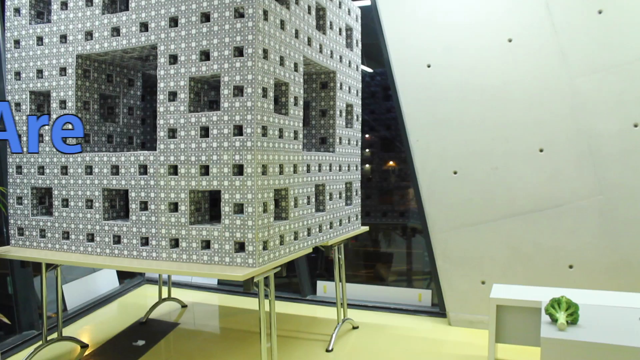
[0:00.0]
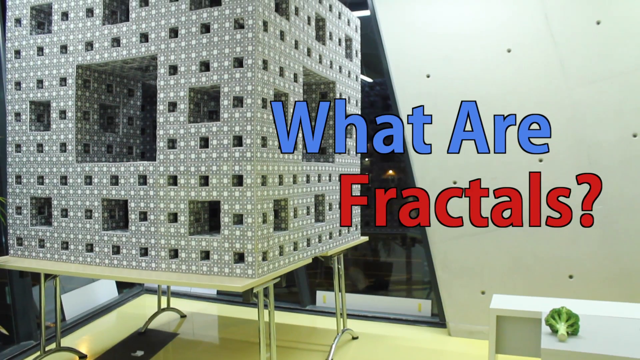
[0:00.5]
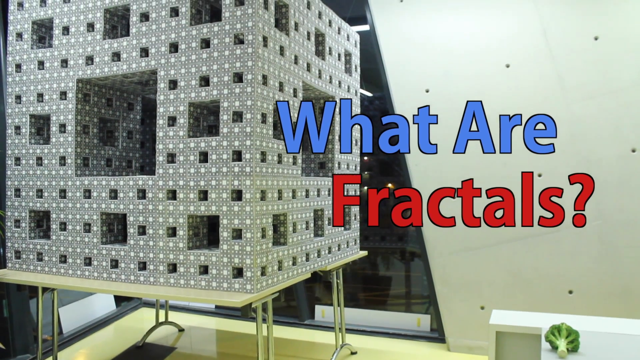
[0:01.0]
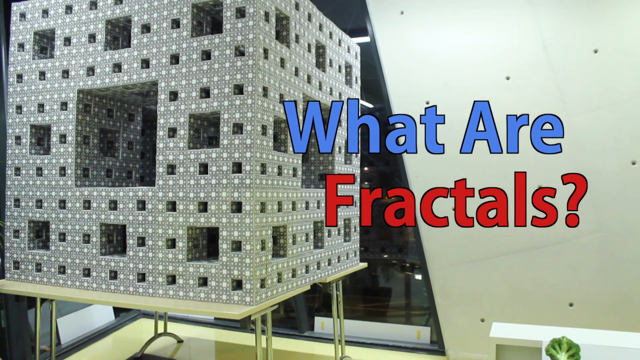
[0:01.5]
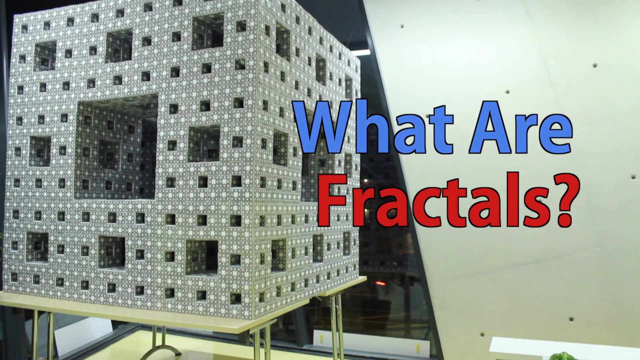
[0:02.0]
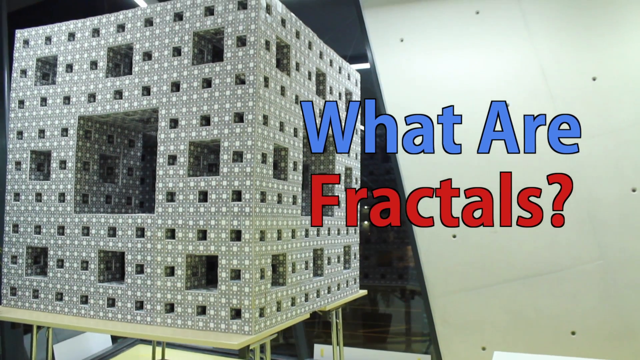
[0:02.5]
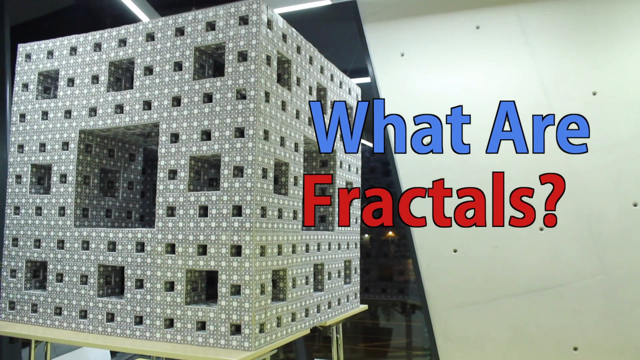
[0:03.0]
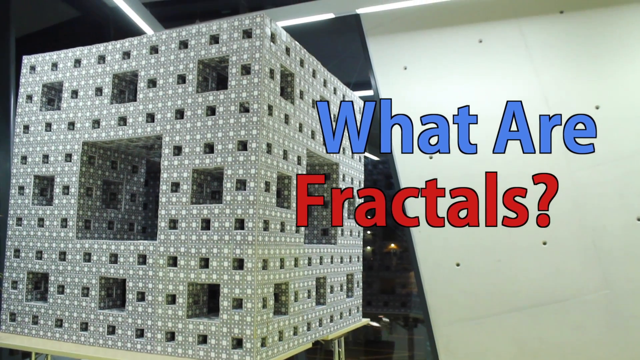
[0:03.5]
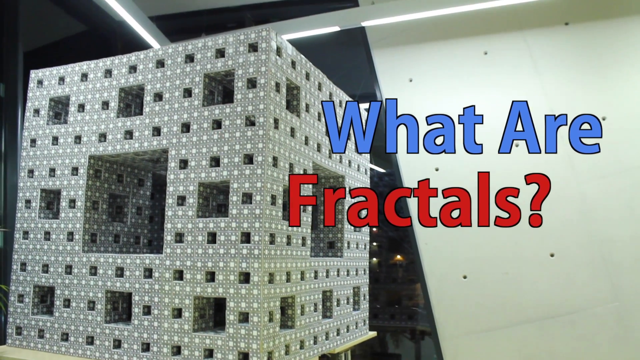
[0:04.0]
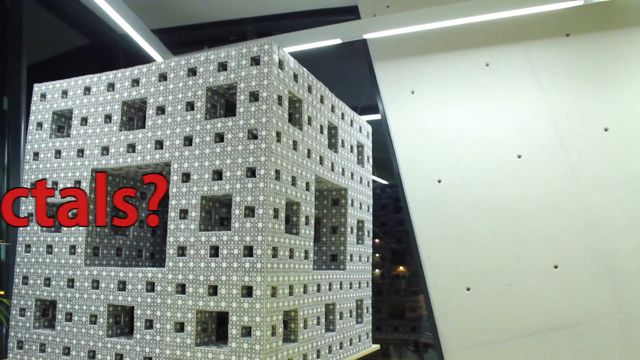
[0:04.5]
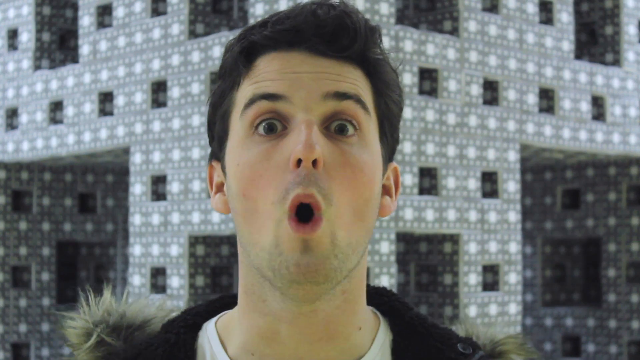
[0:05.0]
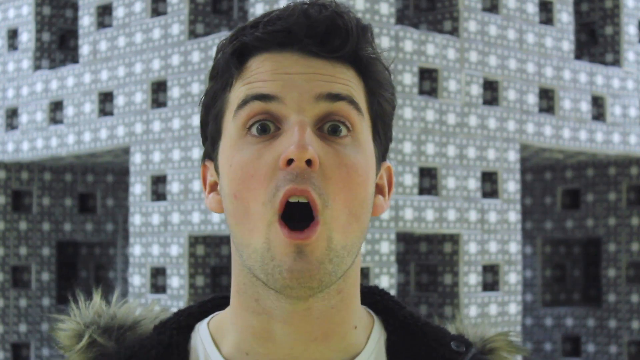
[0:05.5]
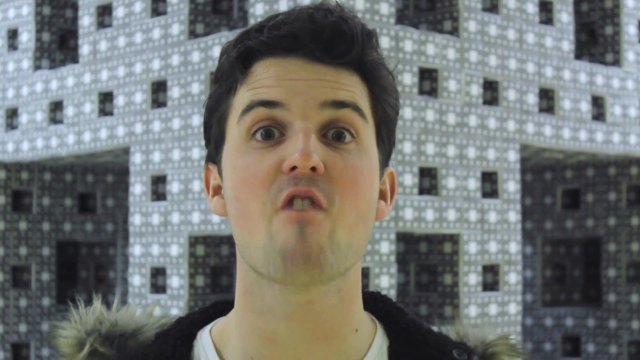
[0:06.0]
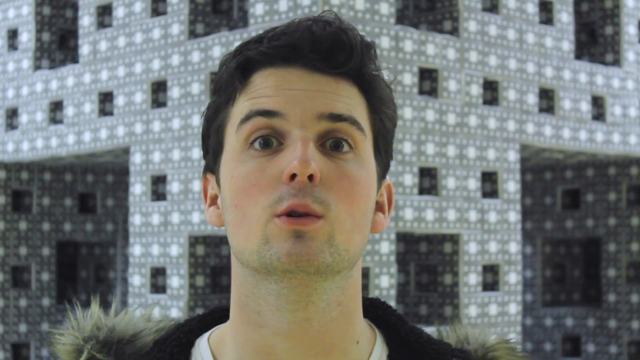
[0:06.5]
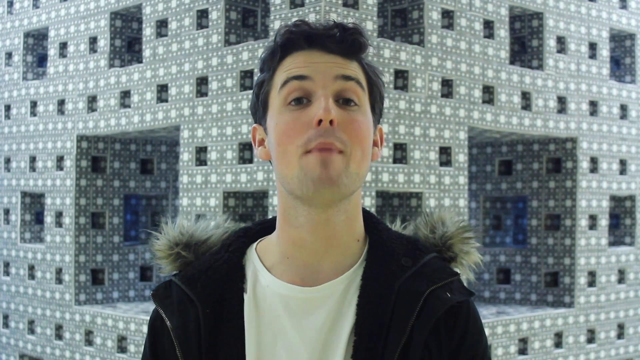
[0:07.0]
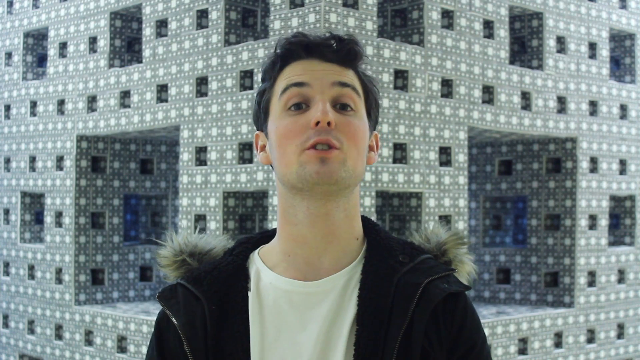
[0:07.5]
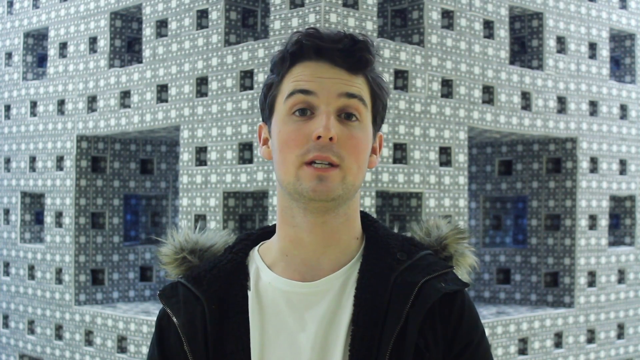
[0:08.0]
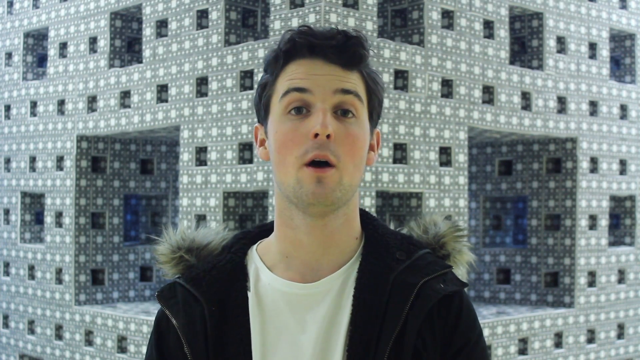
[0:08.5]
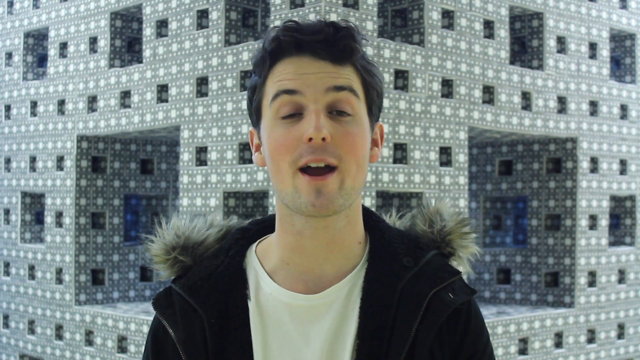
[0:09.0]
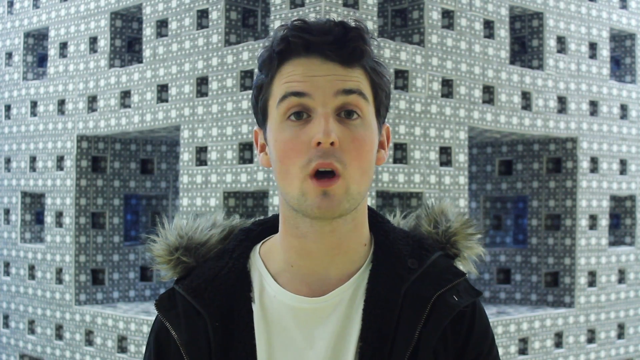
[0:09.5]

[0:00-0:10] A man believed to be in his 30s, wearing a black hoodie jacket and a white t-shirt, shows a 3D representation of a building plan. The design has holes, spaces and compartments.